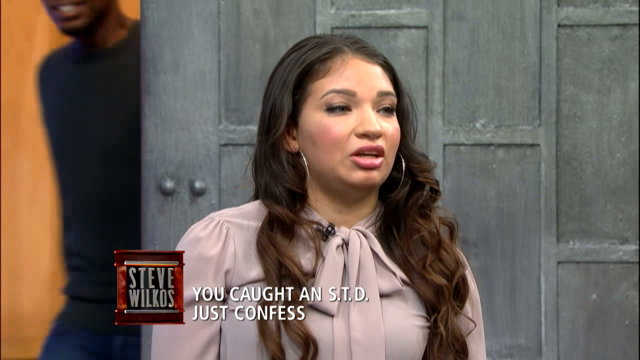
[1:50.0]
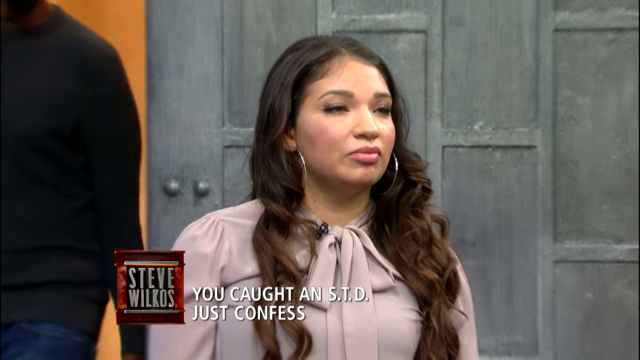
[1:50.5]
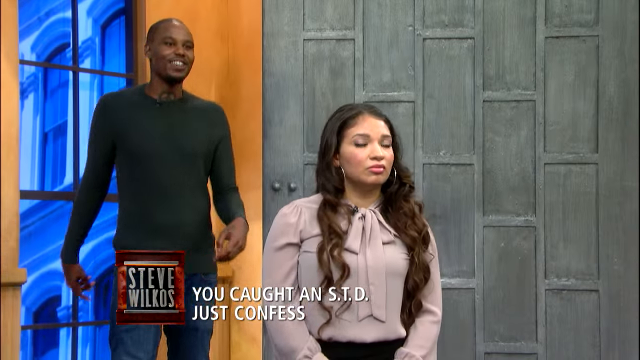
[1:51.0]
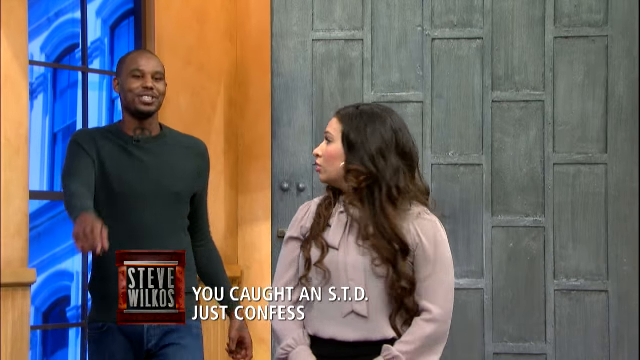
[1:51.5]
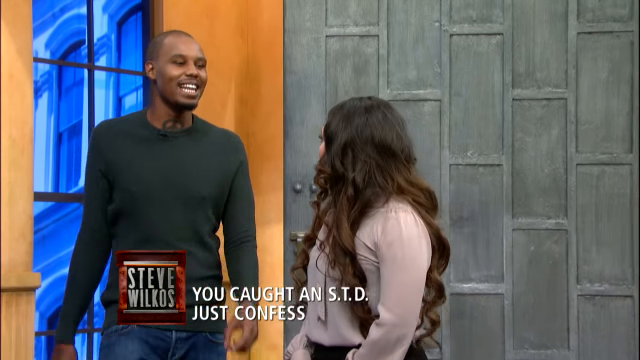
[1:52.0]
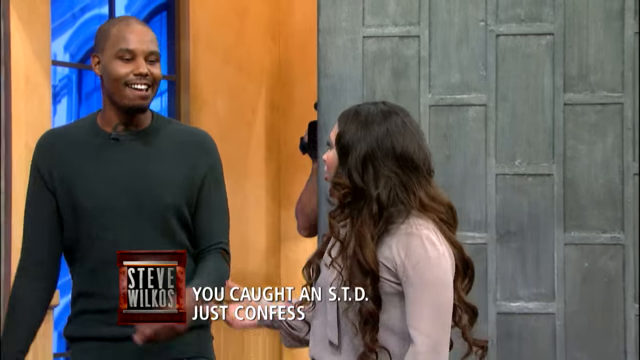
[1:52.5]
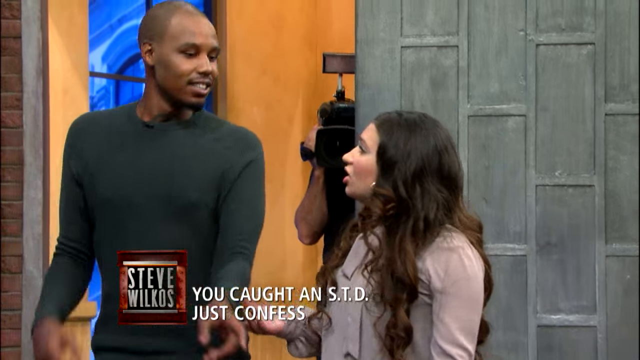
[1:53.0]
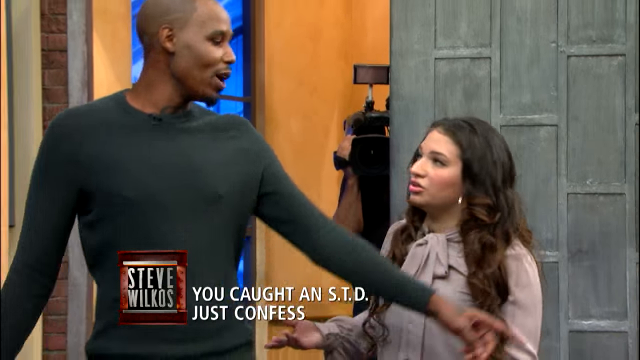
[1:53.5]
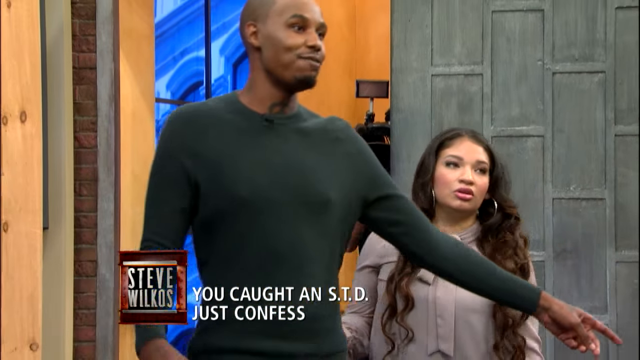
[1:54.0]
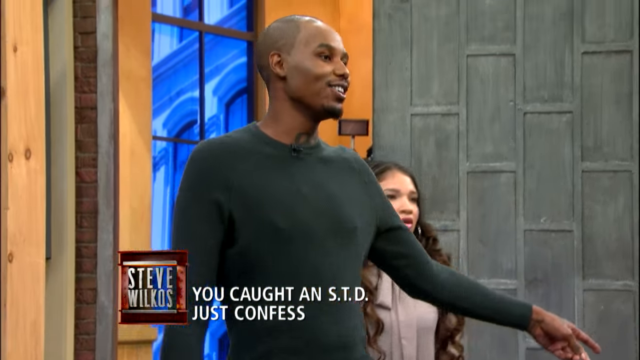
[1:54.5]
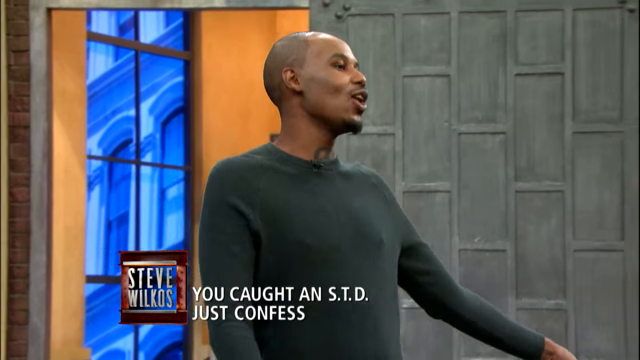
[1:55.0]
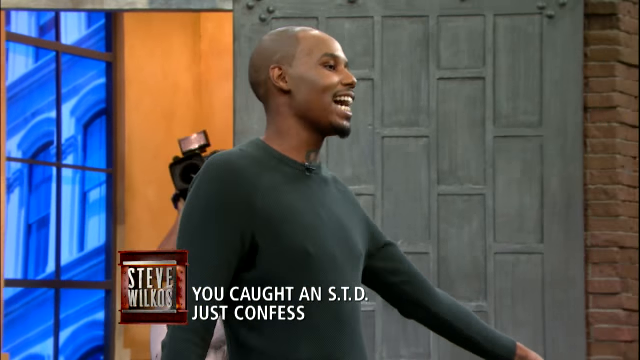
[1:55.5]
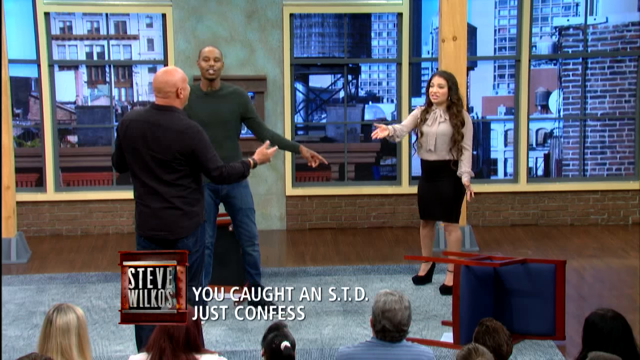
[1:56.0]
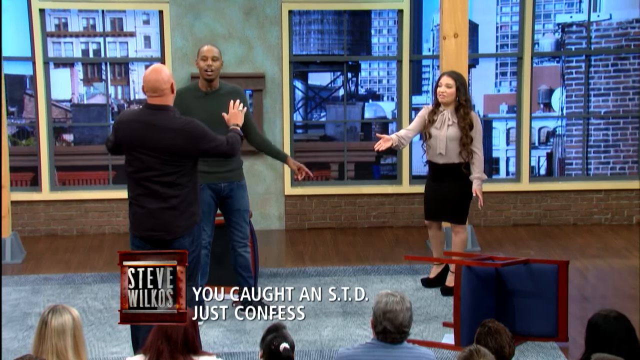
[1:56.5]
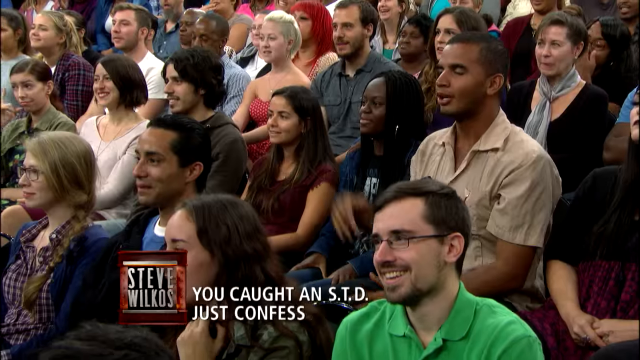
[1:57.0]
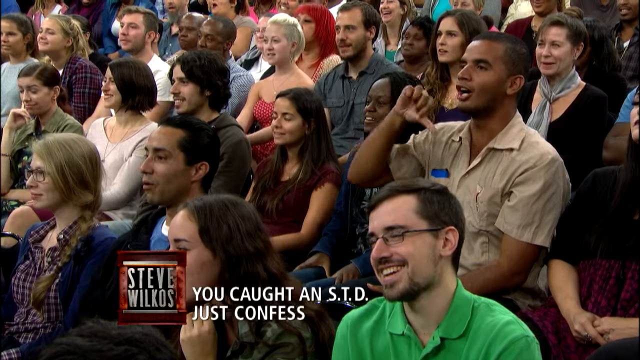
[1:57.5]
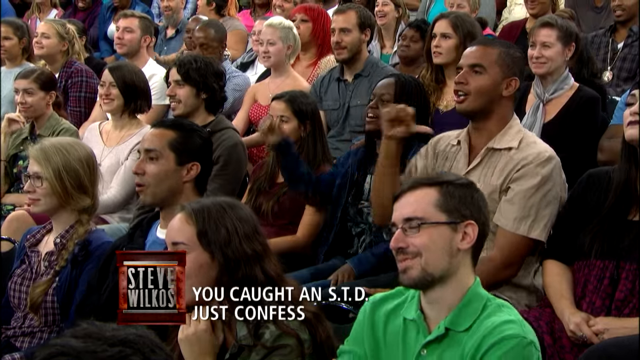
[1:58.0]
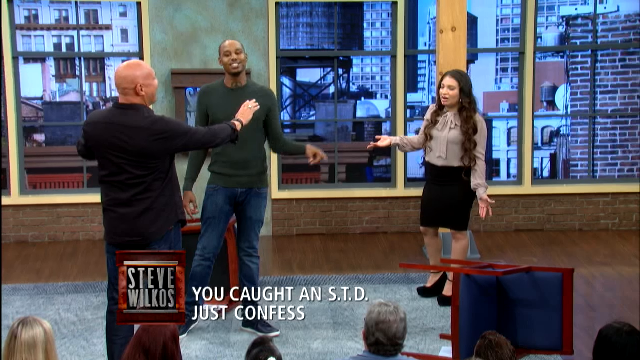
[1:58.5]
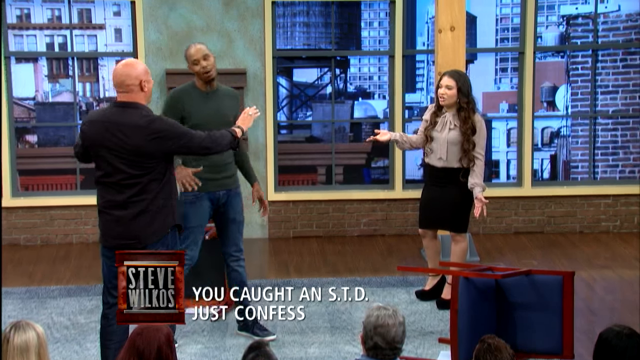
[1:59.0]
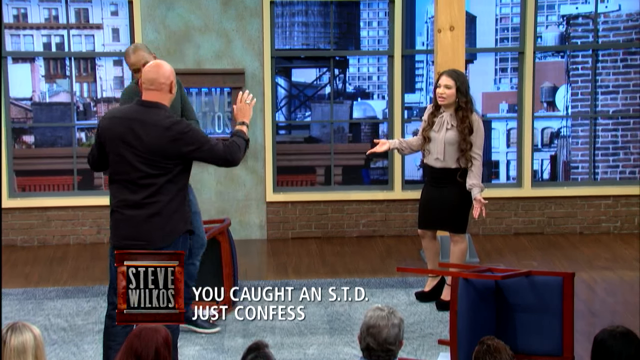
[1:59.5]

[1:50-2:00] The young man comes in from the left, from just behind the gray door behind the young woman, and she turns to look at him. He seems to be making some kind of comment as he enters. Just behind the door, another video camera is visible, mostly the camera and the arm of the person operating it. The woman starts to reach out toward the man and seems to say something to him; he somewhat pushes her away and steps in front of her while gesturing toward the right, still talking. In a wide shot, he makes his point, the young woman holds her left hand out as if objecting, and the host in front of them both holds both hands up. The video switches to the audience, where people are mostly smiling again, and one man toward the right side gives a thumbs-down. Another shot shows the three still arguing.